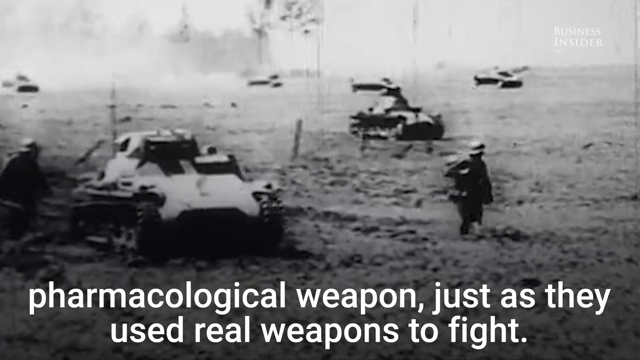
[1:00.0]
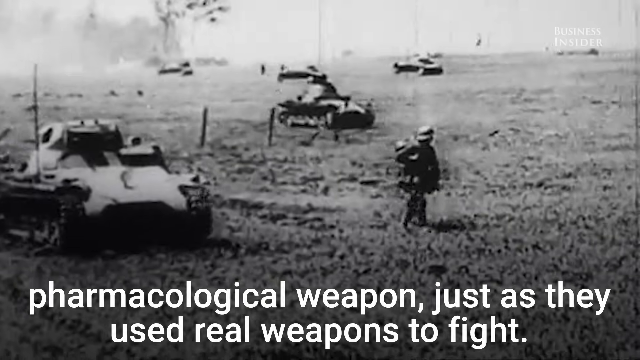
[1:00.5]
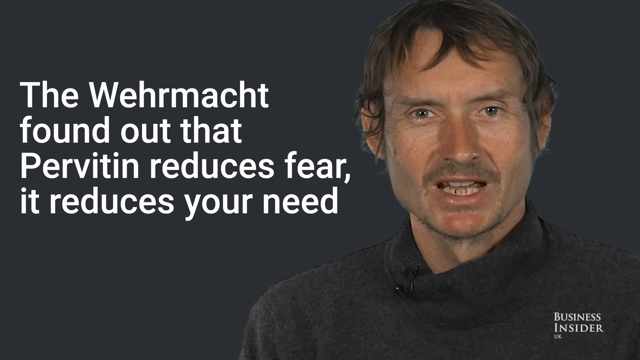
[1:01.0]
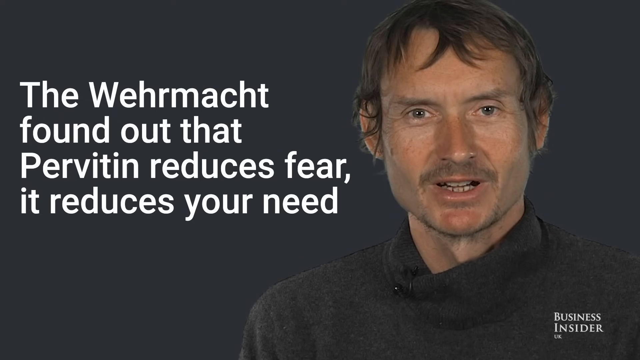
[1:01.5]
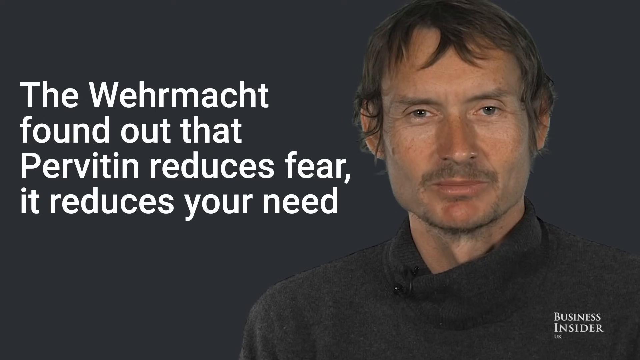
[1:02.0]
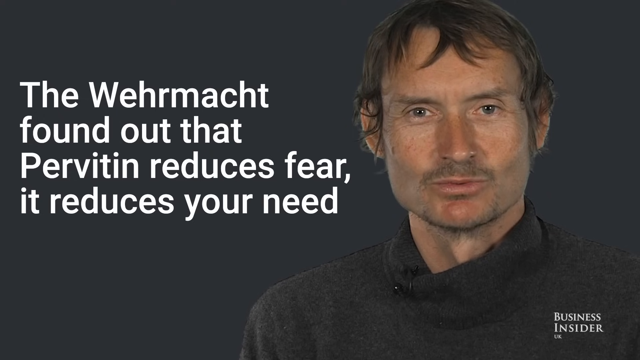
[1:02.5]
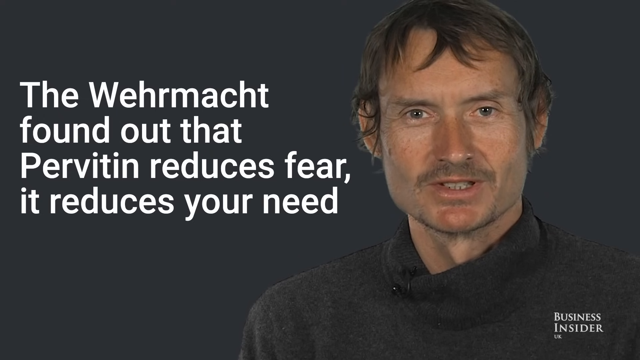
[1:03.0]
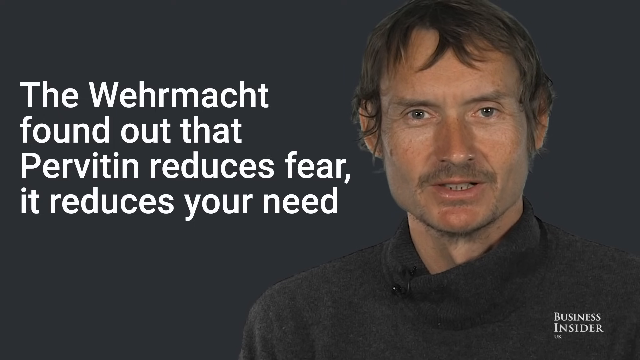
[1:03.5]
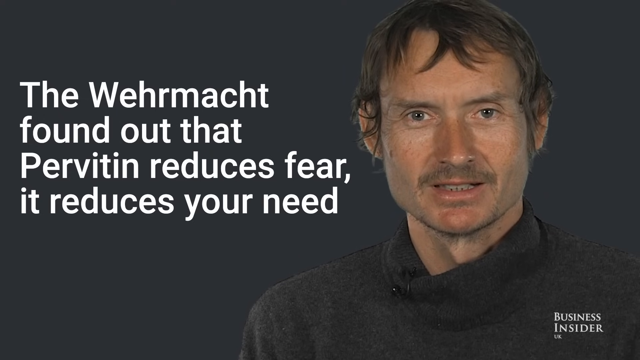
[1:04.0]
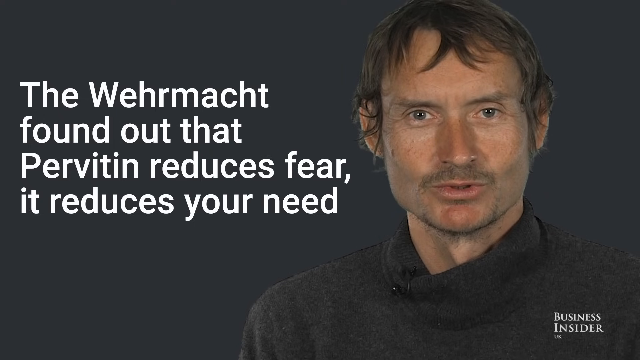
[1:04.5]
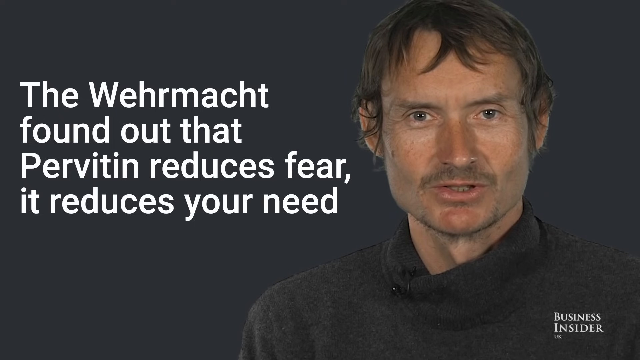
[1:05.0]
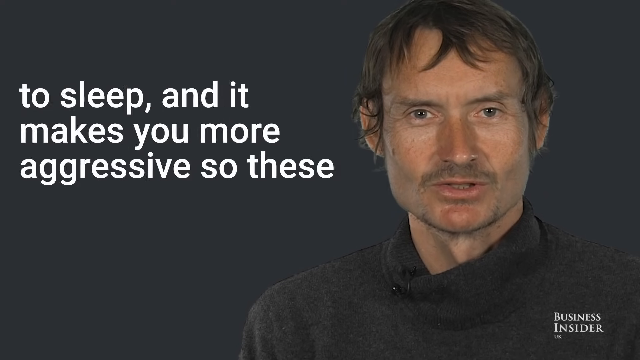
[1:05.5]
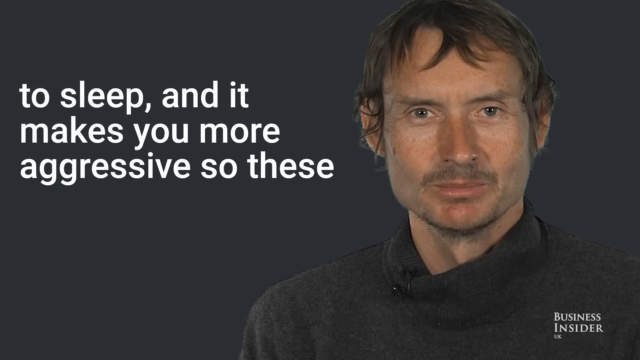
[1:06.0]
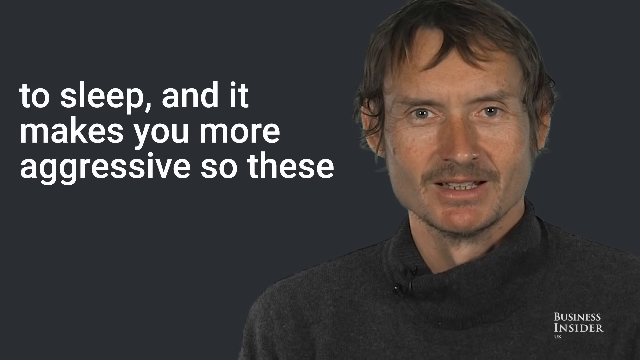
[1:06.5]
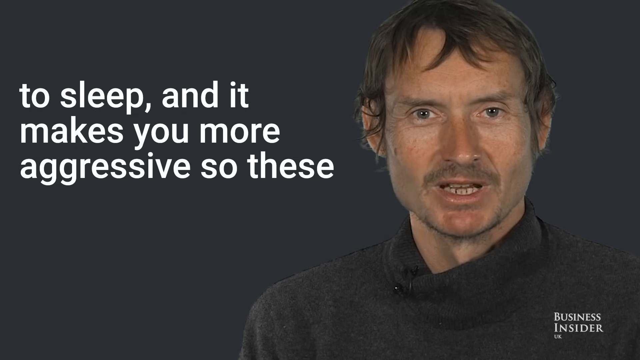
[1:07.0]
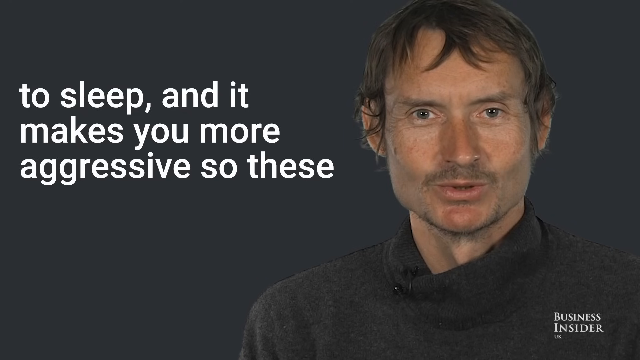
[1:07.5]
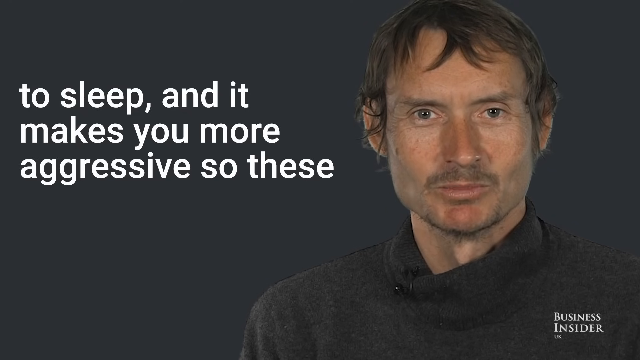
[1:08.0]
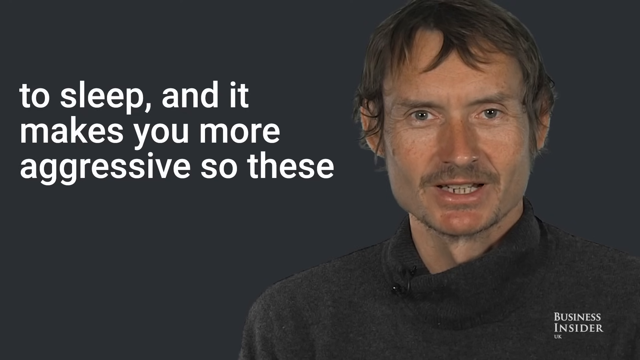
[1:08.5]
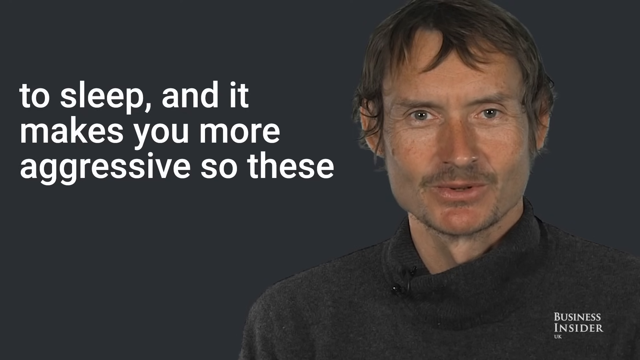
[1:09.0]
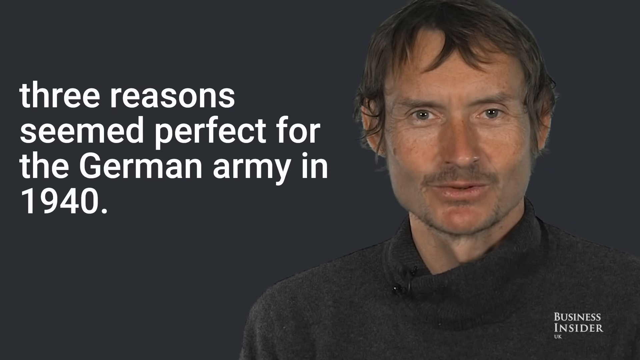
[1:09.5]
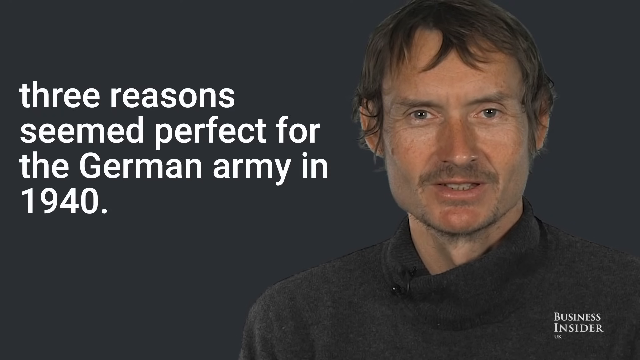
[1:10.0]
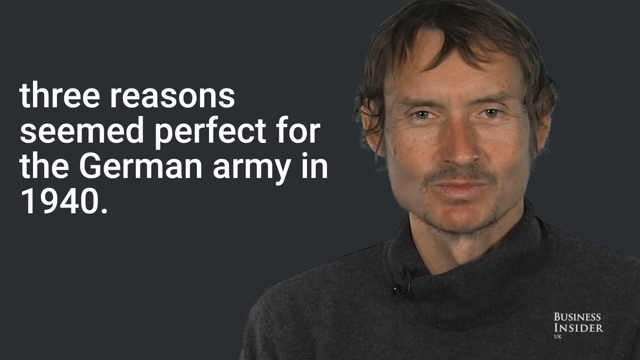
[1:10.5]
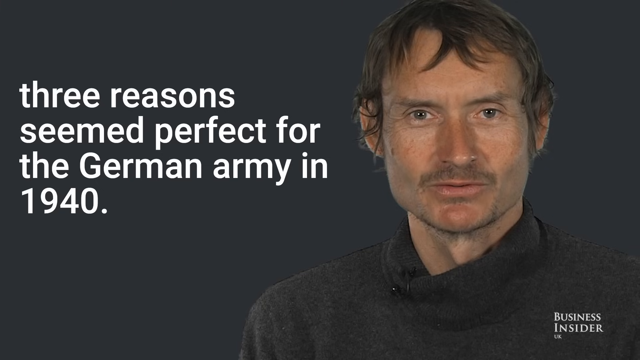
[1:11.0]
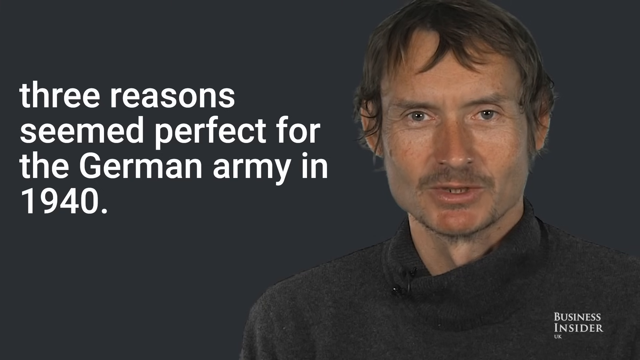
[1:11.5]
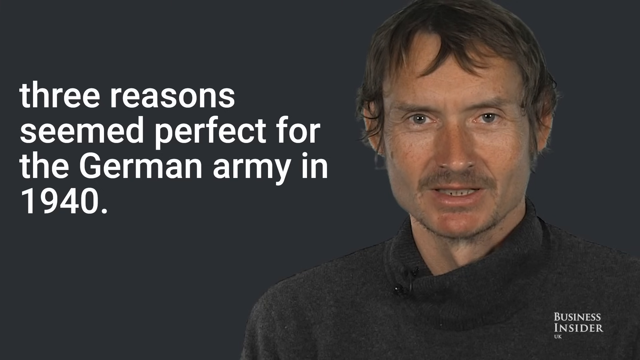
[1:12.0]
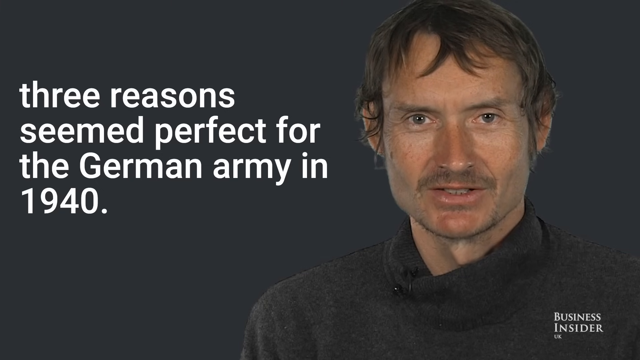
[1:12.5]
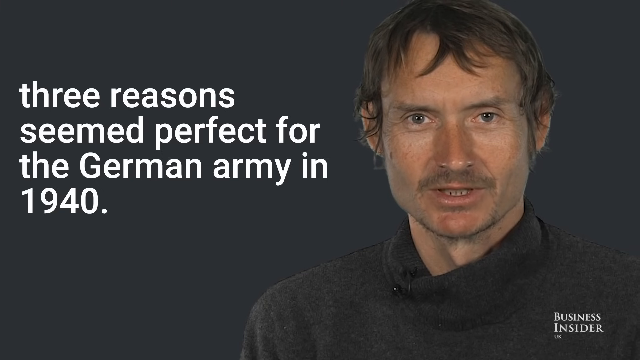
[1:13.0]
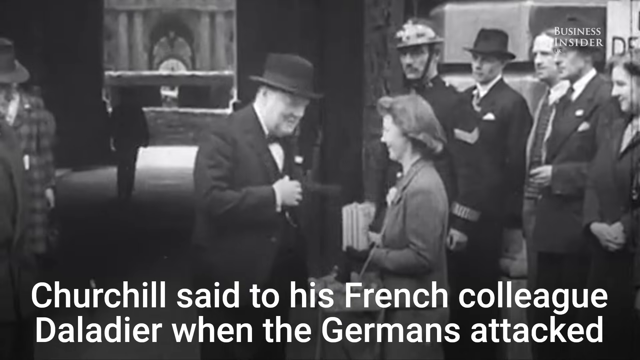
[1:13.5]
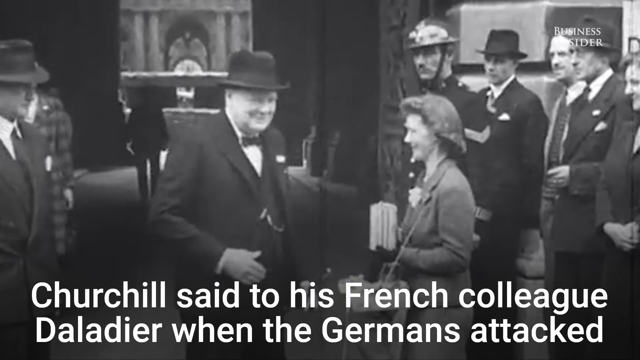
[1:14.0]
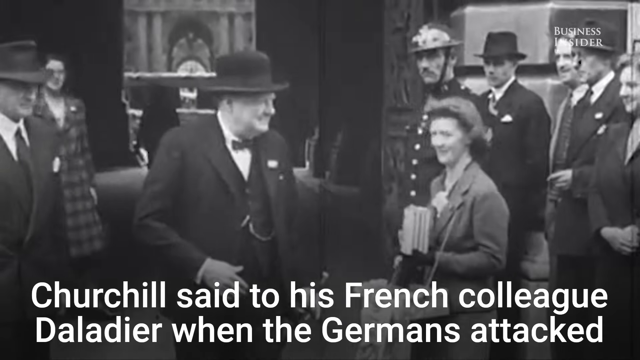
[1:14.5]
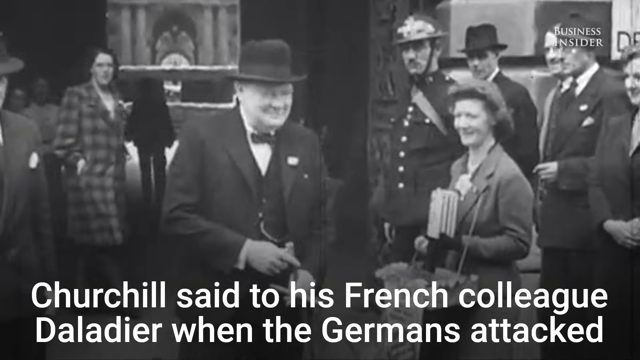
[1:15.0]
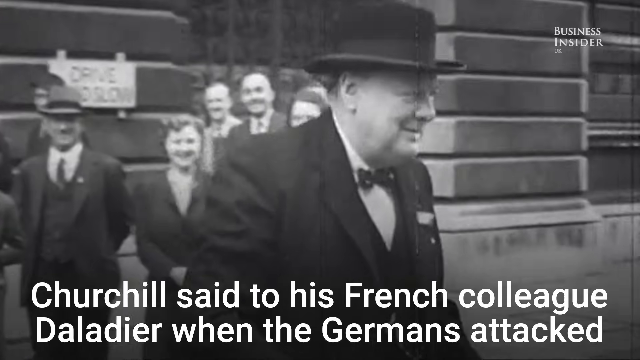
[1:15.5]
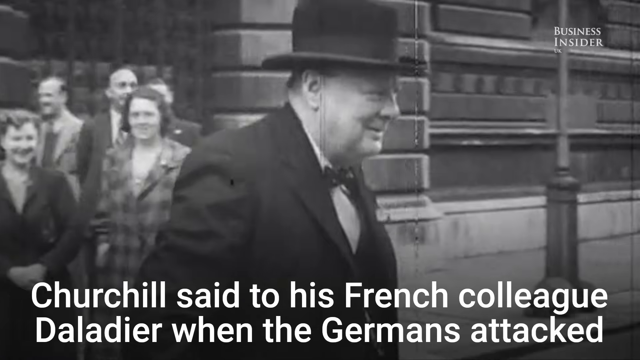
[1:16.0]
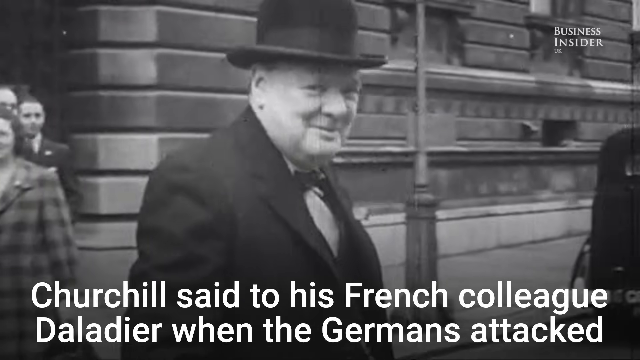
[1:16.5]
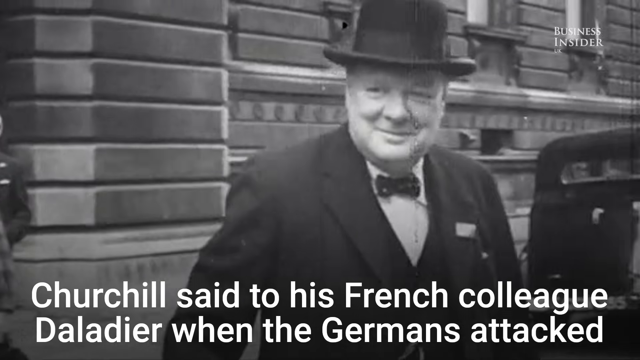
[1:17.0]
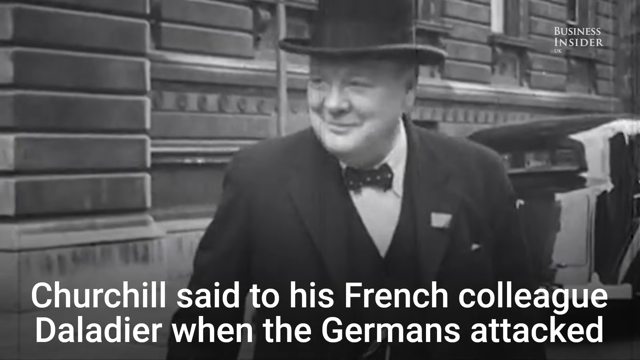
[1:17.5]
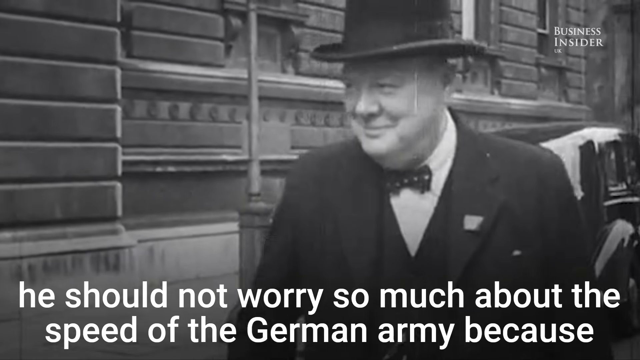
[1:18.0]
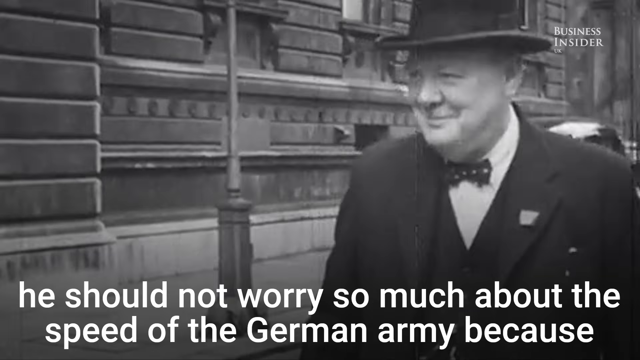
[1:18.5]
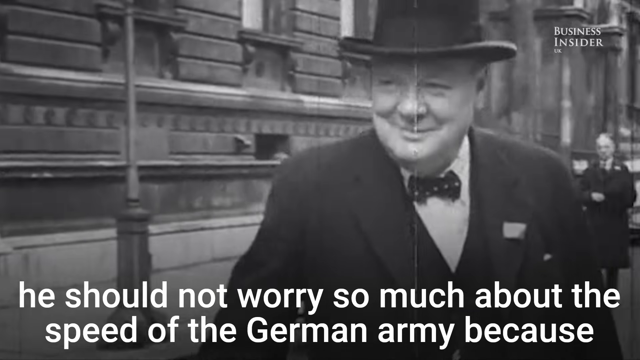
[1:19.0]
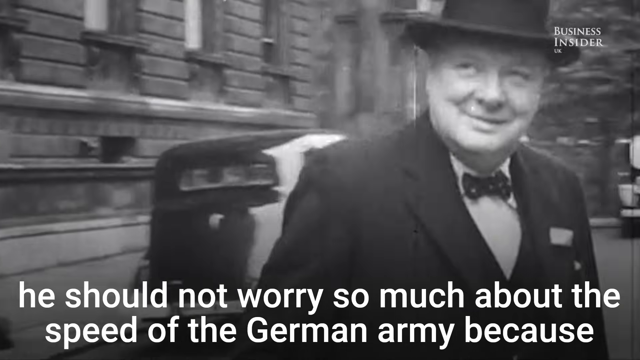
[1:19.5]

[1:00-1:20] Soldiers walk on the battlefield with the tanks, and then the video cuts to the man narrating the documentary, with new text to his left that includes "reduces fear" and "so these three reasons seem perfect for the German Army in 1940." The video then shows a man who is apparently Churchill, wearing a red top hat and a black vest, with other people behind him smiling at him. He looks like a rich man, has a big smile on his face, and looks like he is about to get into a fancy car; he looks back at them with a smile.